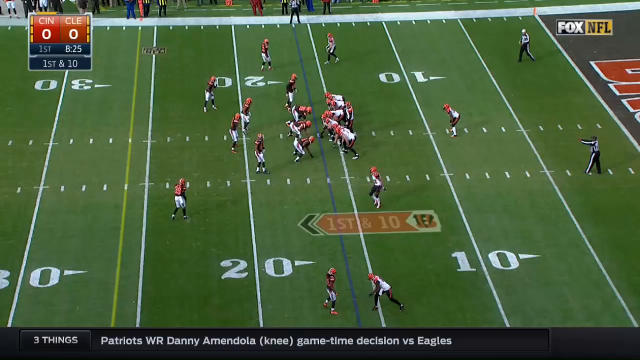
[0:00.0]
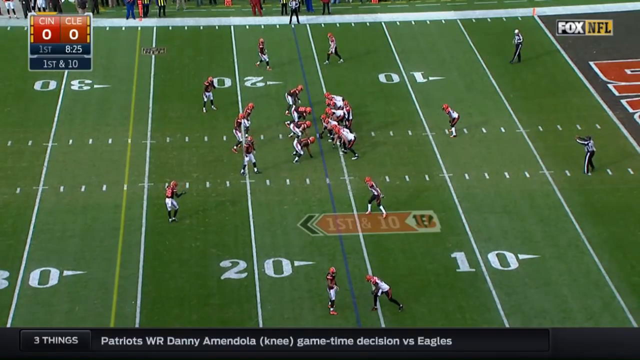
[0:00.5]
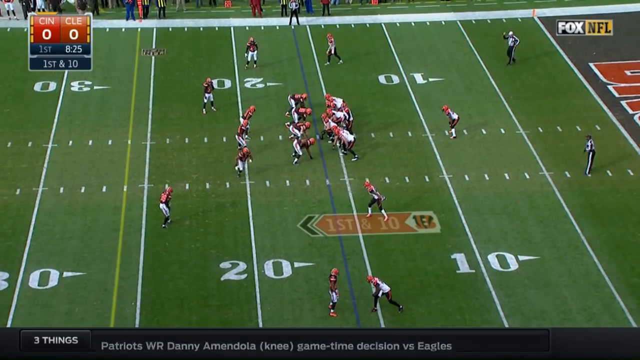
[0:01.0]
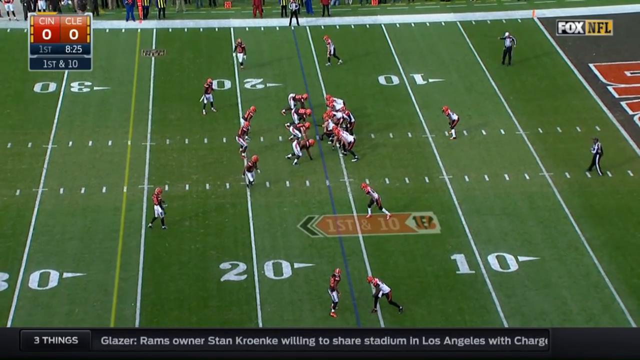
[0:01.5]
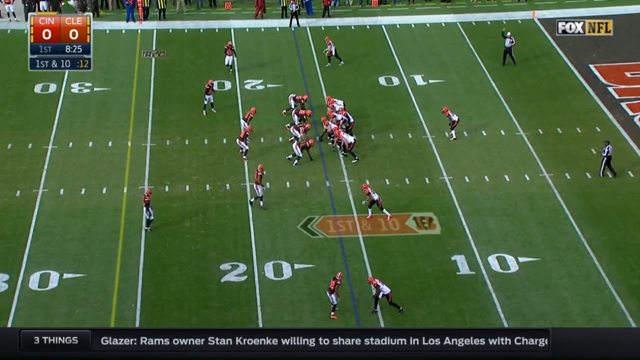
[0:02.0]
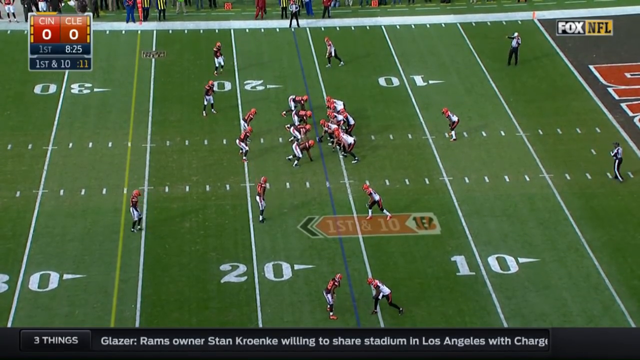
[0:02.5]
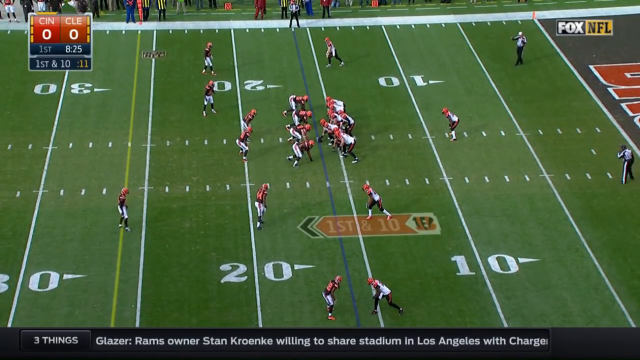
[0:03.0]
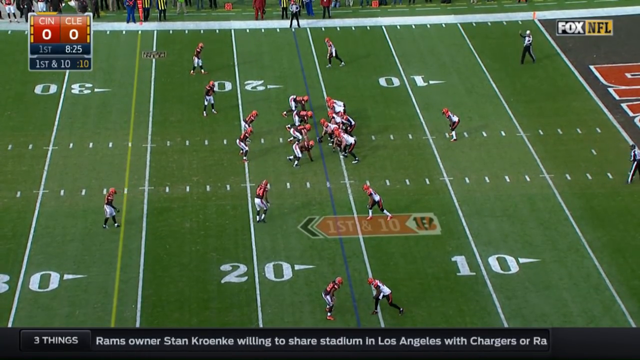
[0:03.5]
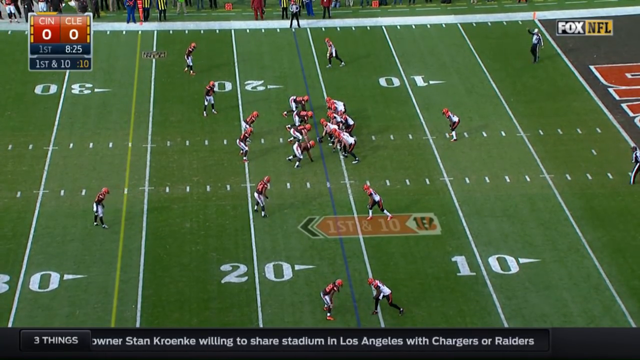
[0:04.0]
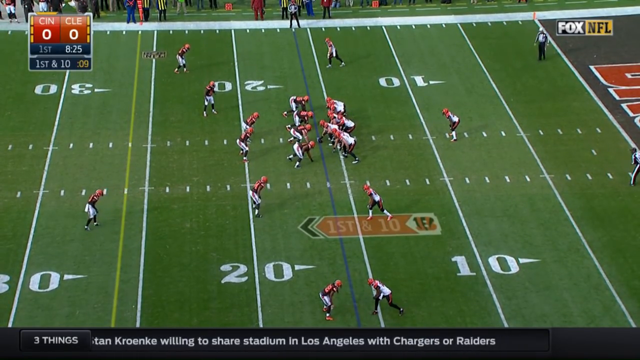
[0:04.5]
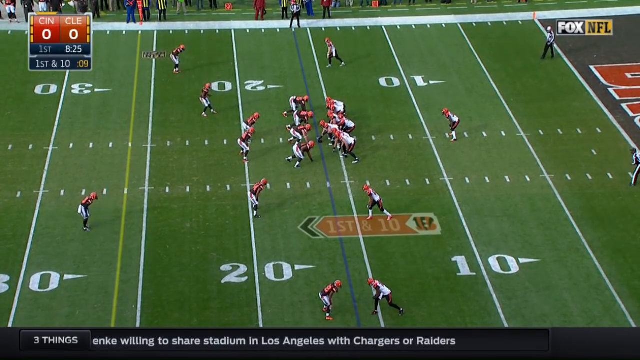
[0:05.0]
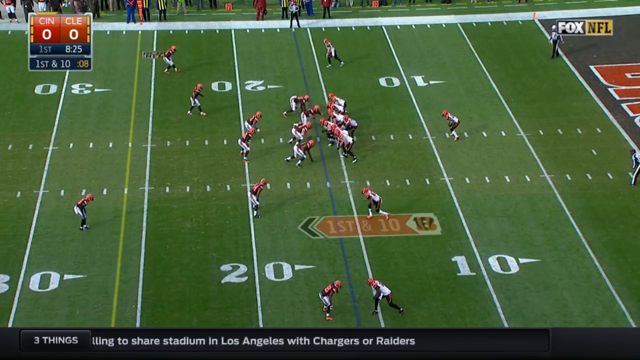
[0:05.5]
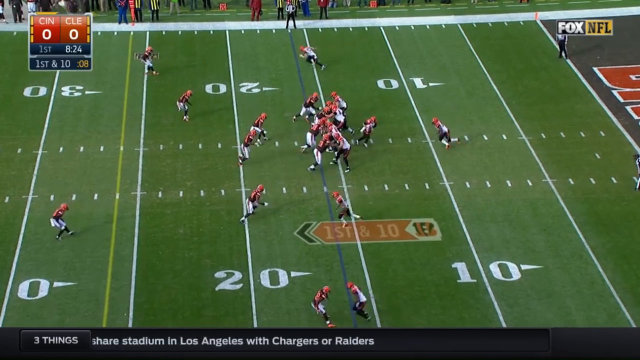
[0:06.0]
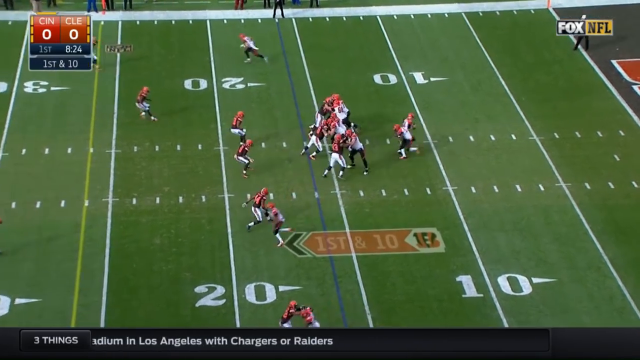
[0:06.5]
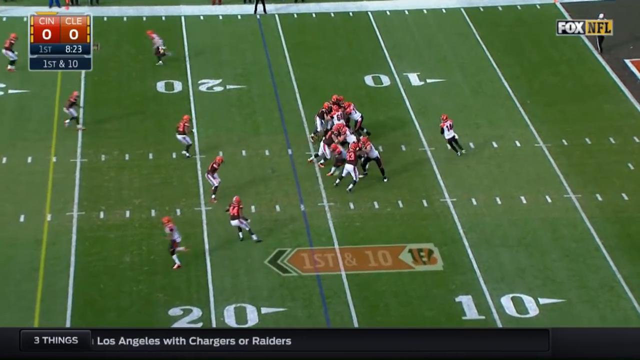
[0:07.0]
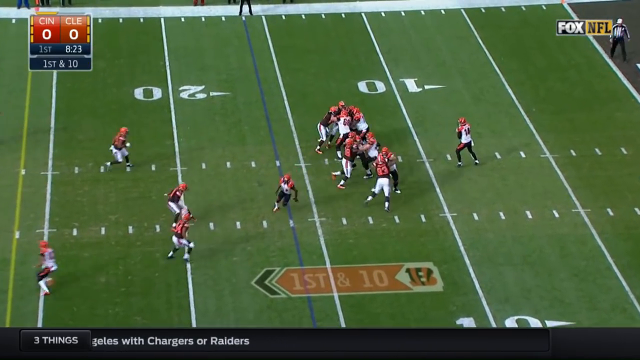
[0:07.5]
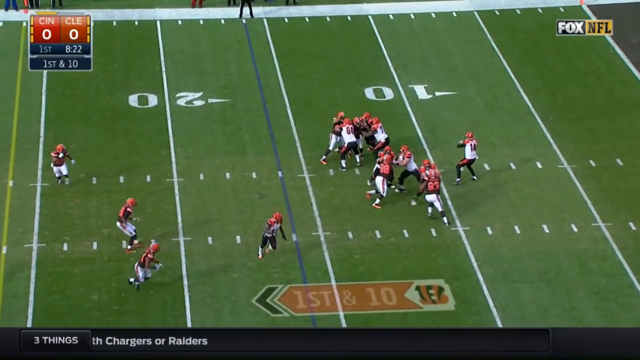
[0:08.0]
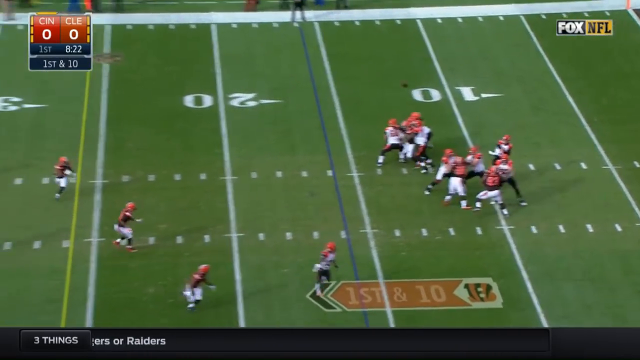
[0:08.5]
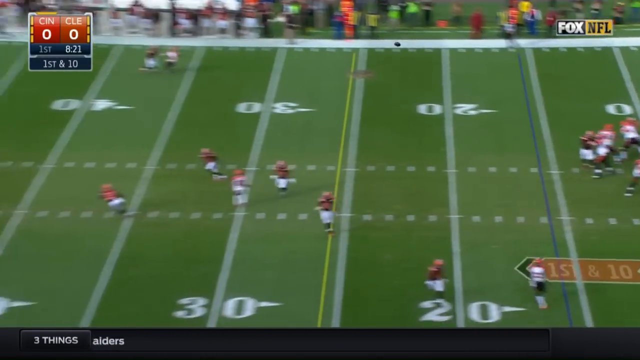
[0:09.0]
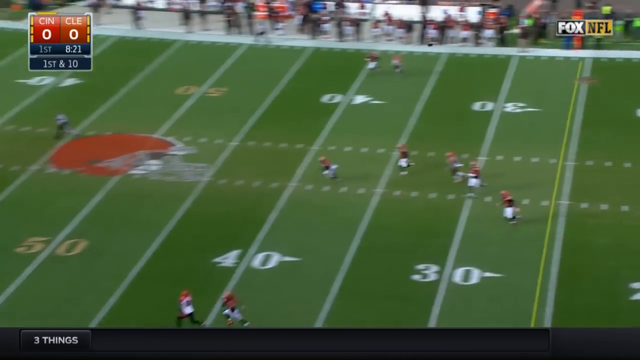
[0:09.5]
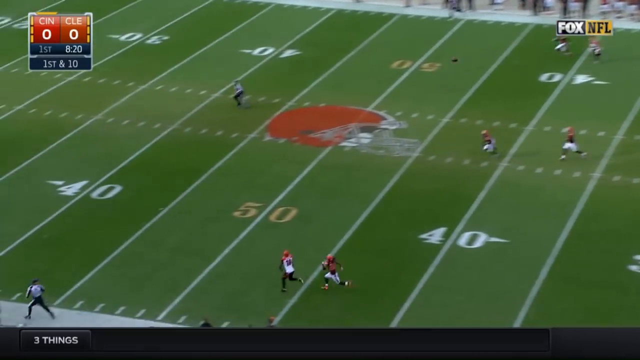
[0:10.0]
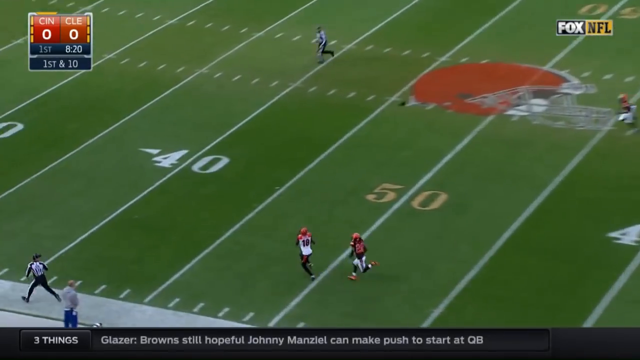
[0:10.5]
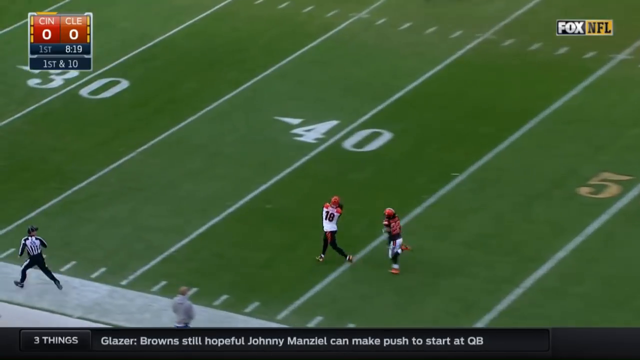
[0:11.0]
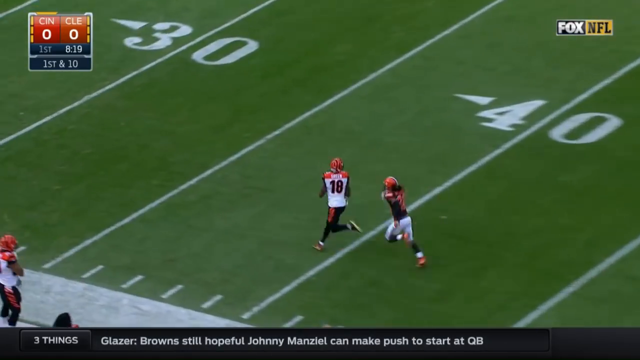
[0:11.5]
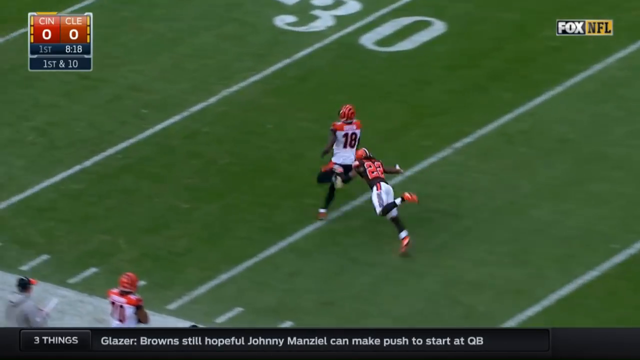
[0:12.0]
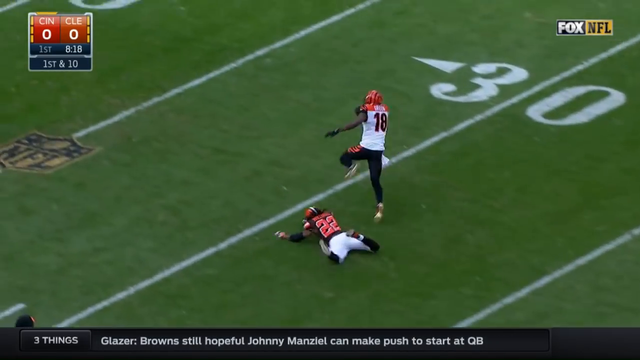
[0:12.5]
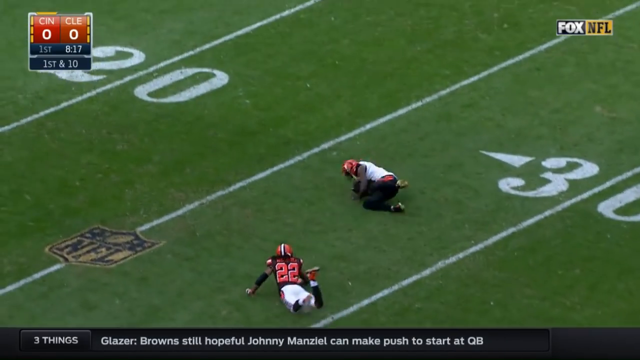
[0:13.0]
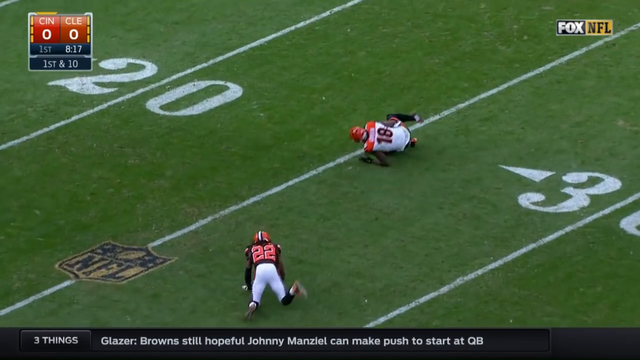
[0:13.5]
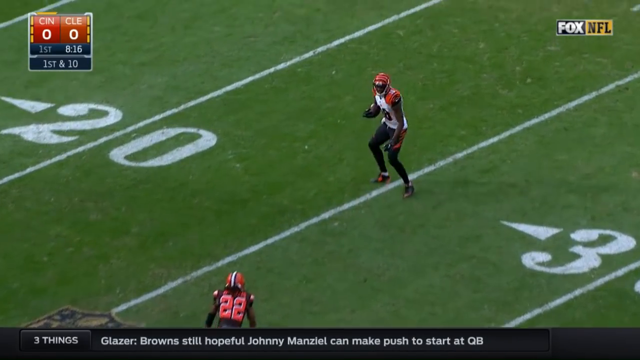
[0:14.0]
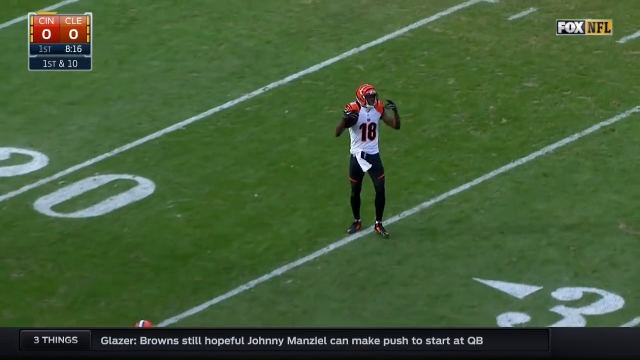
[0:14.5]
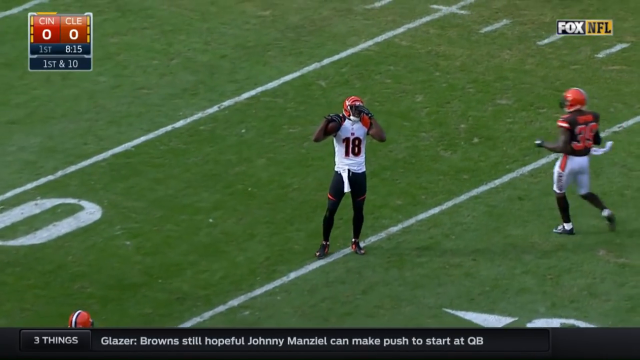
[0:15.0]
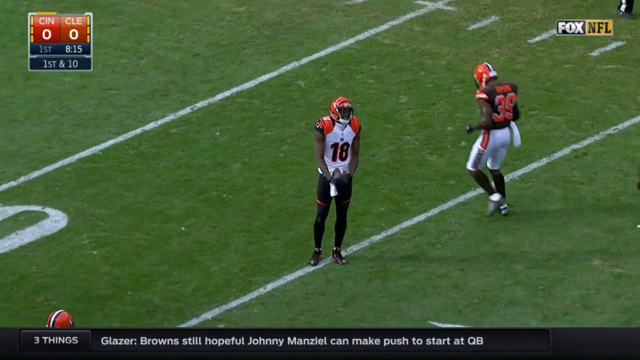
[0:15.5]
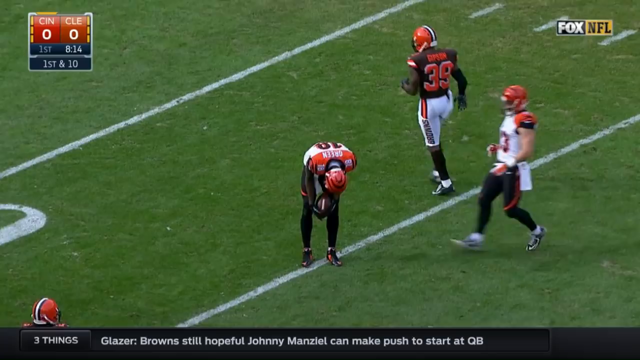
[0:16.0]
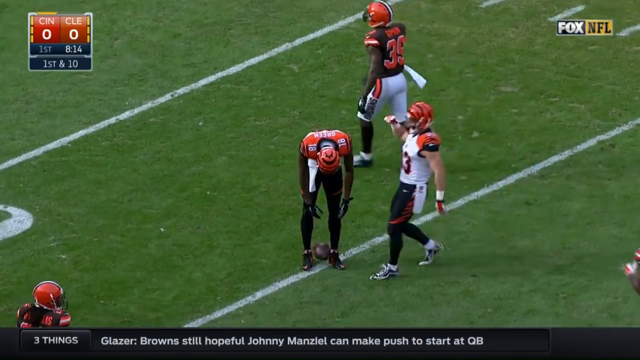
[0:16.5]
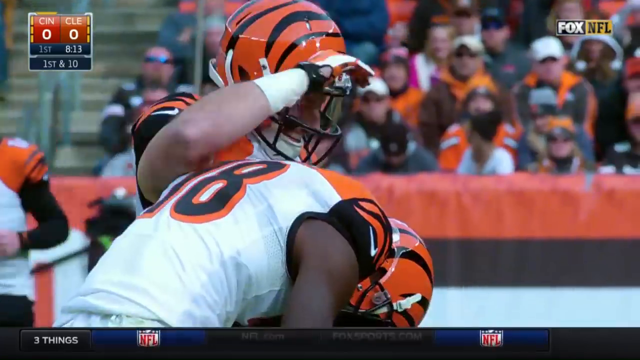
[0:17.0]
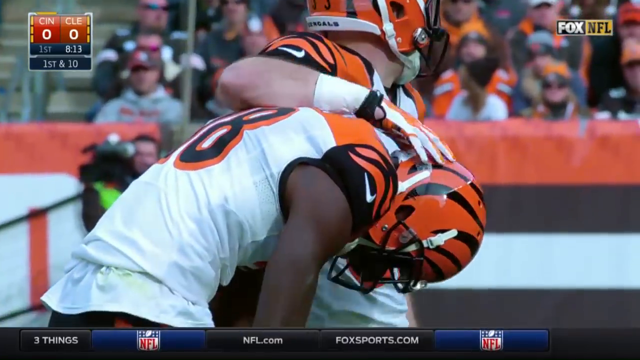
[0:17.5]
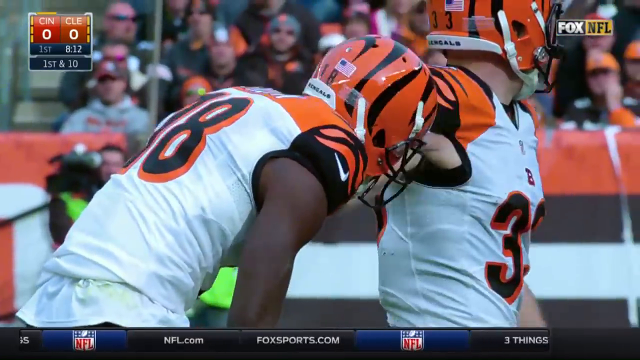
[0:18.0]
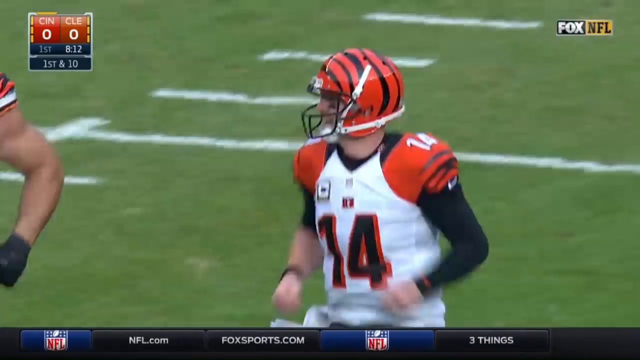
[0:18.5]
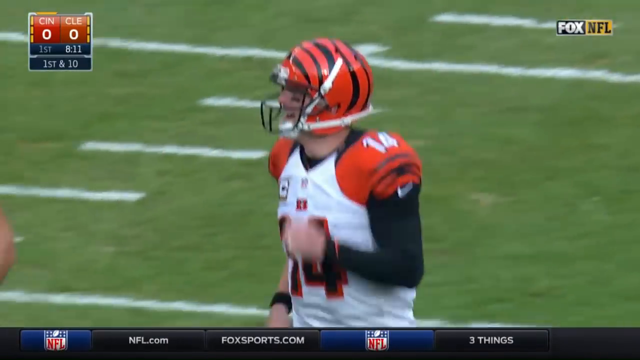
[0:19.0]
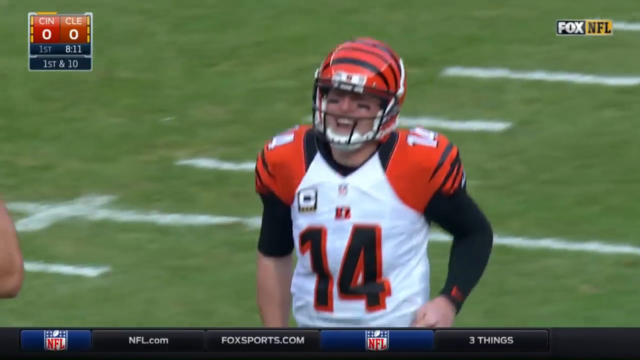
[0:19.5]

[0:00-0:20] An NFL American football game between the Cleveland Browns and the Cincinnati Bengals is shown on the Fox TV channel. It is the first quarter with 8 minutes 25 seconds left and no score. The Bengals are on offense and run a play: the quarterback calls the play, drops back, fakes a handoff to the running back, looks downfield, and throws a long pass right-handed from the 10-yard line. The ball sails through the air to a wide receiver in the open, who catches it at the Cincinnati 45 and is tackled by a Browns defensive back after a huge gain. The Bengals quarterback, number 14, looks very happy.